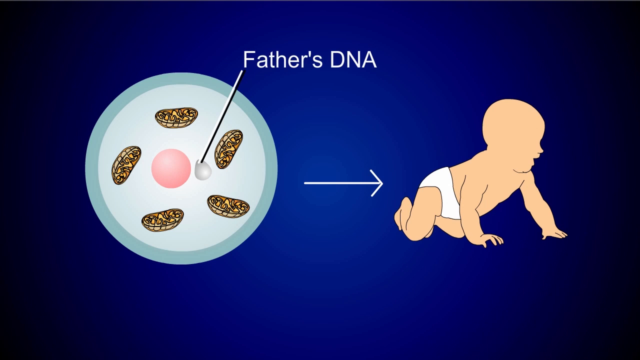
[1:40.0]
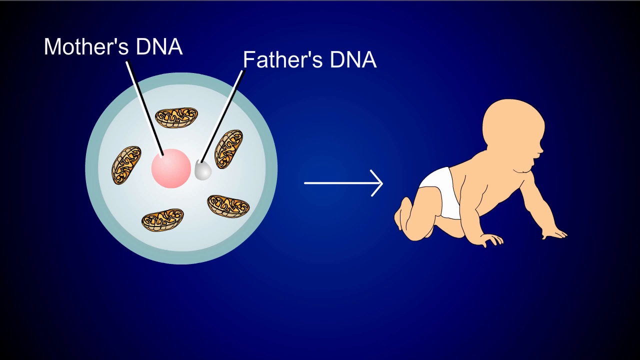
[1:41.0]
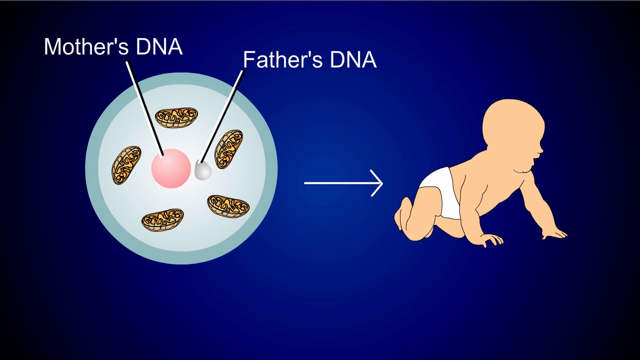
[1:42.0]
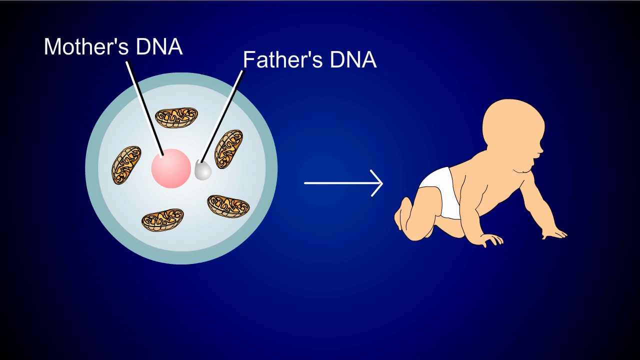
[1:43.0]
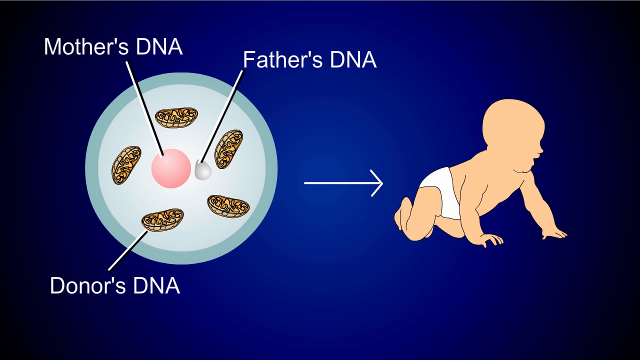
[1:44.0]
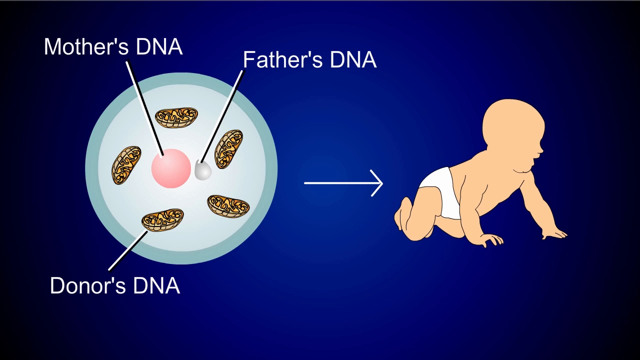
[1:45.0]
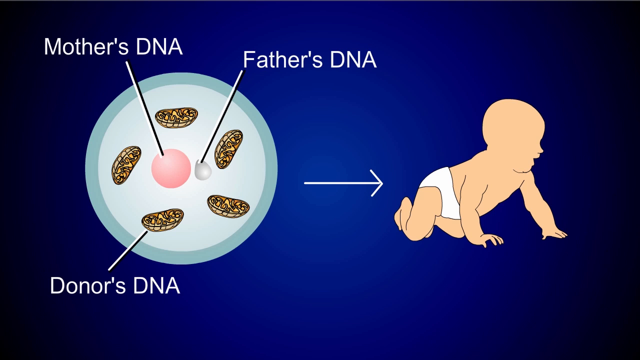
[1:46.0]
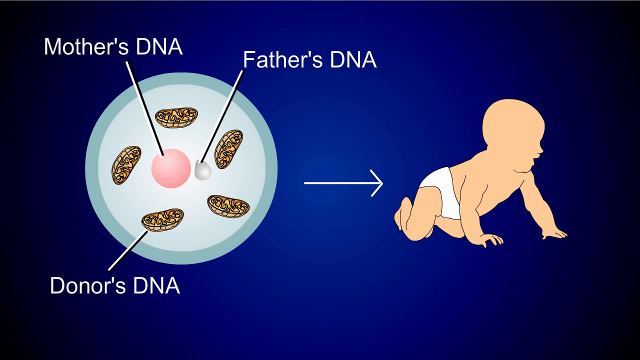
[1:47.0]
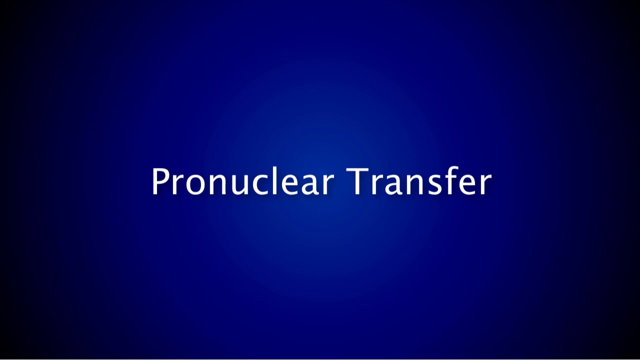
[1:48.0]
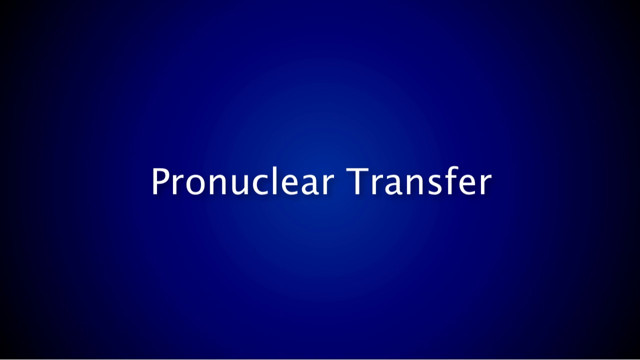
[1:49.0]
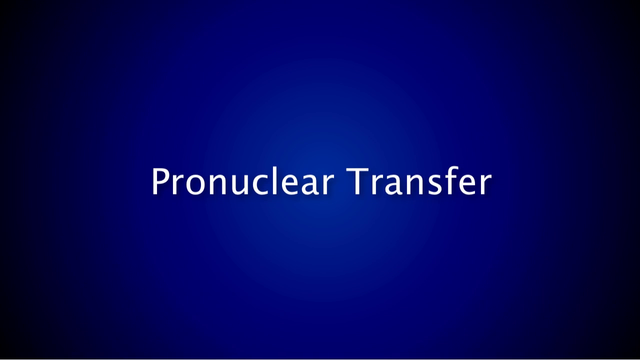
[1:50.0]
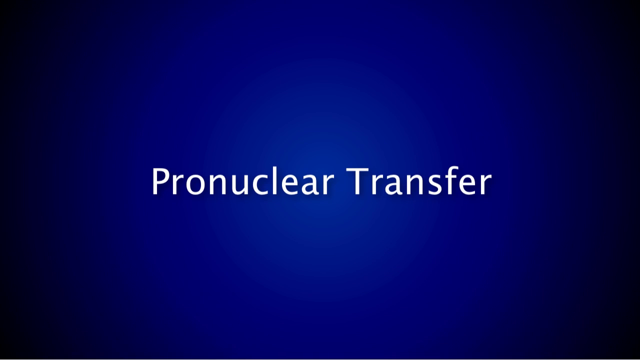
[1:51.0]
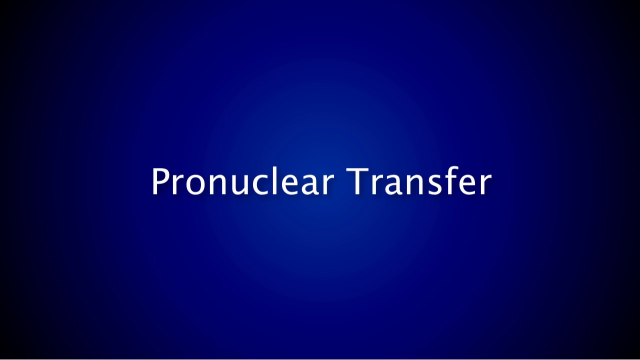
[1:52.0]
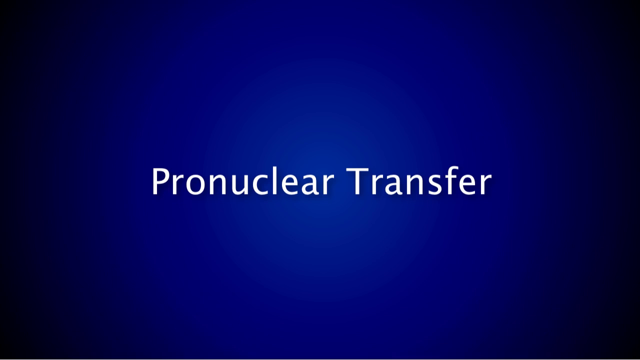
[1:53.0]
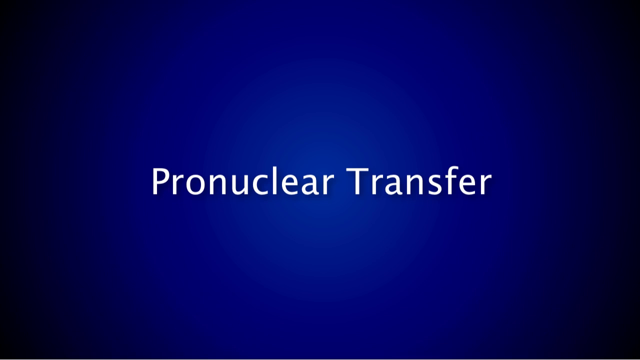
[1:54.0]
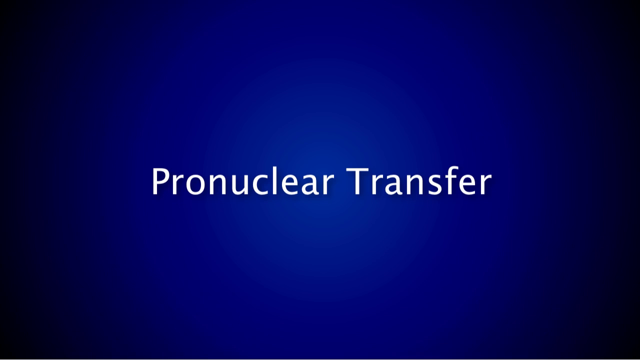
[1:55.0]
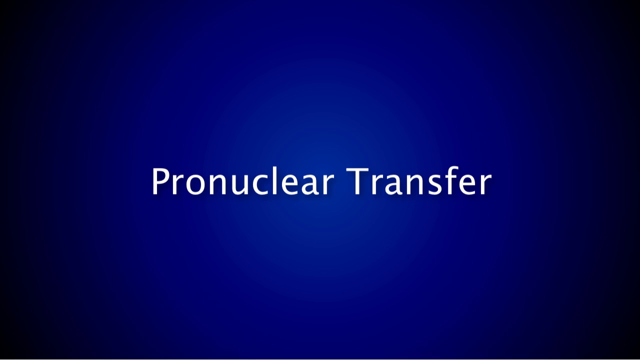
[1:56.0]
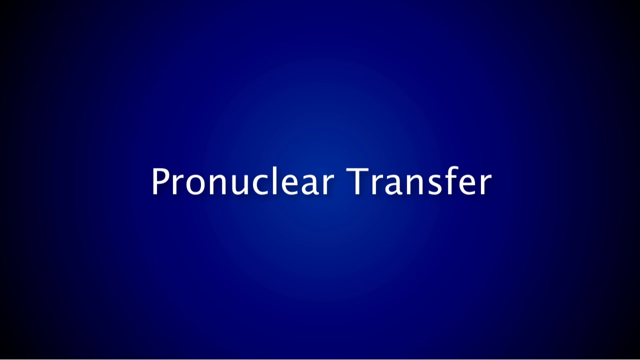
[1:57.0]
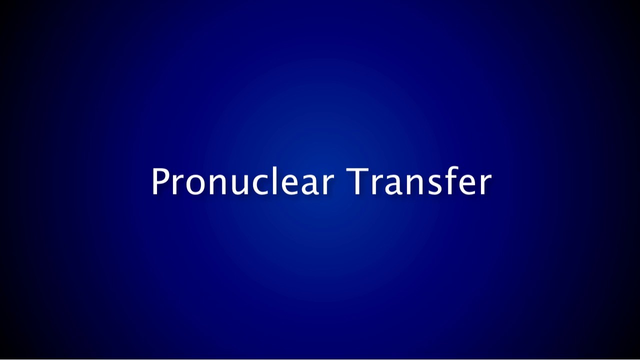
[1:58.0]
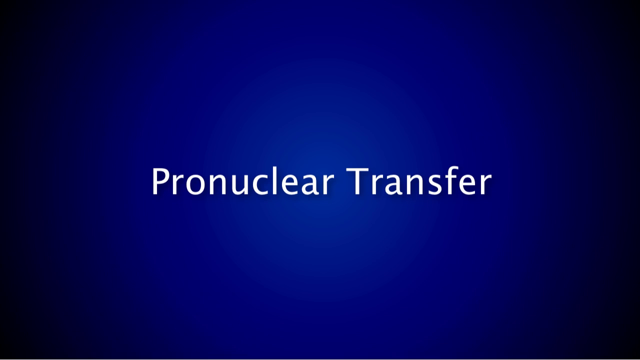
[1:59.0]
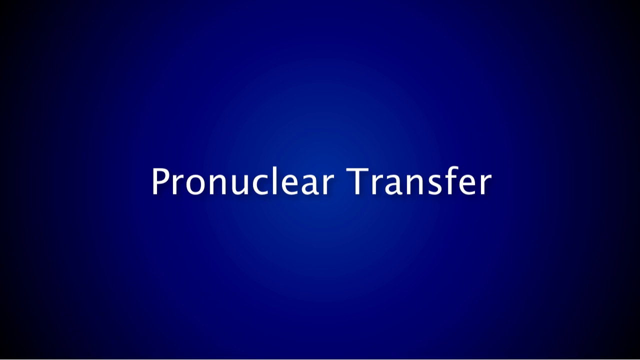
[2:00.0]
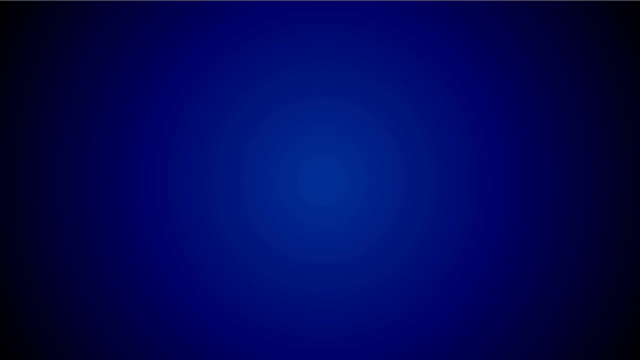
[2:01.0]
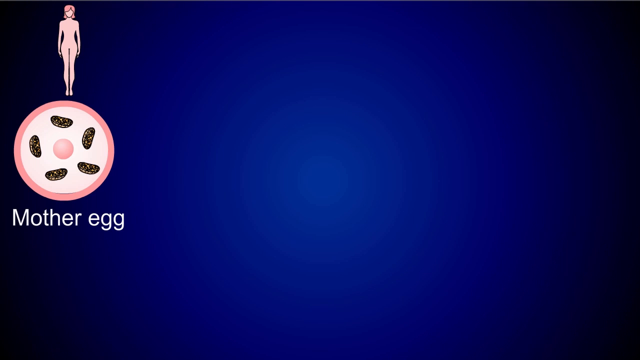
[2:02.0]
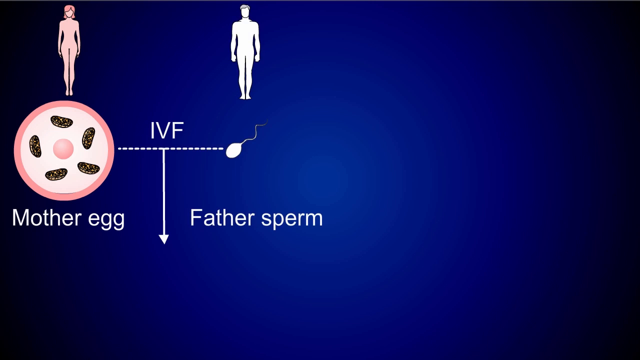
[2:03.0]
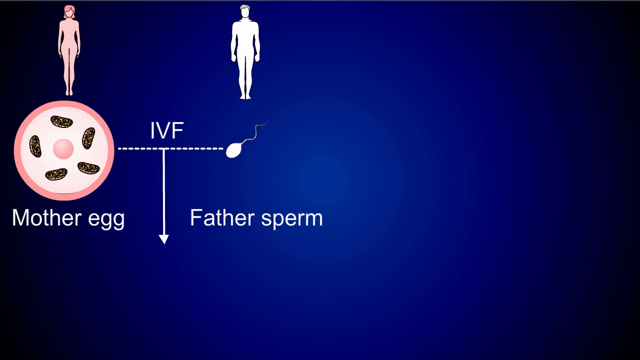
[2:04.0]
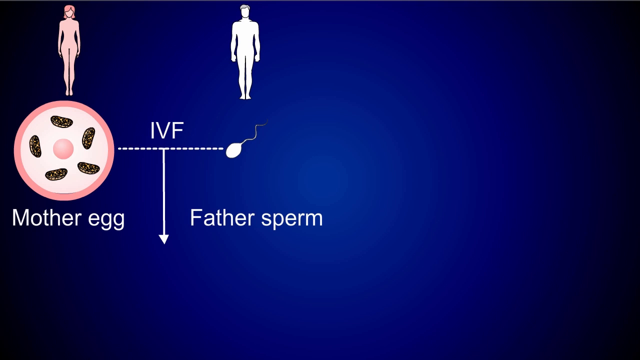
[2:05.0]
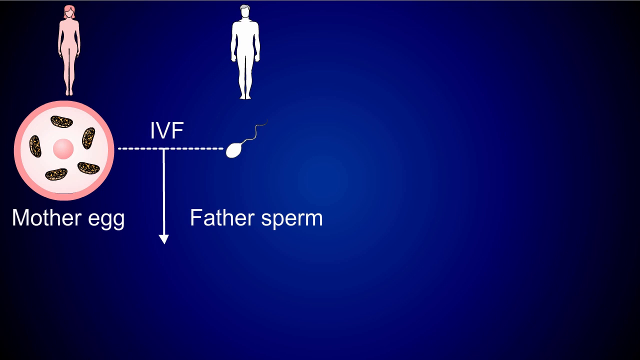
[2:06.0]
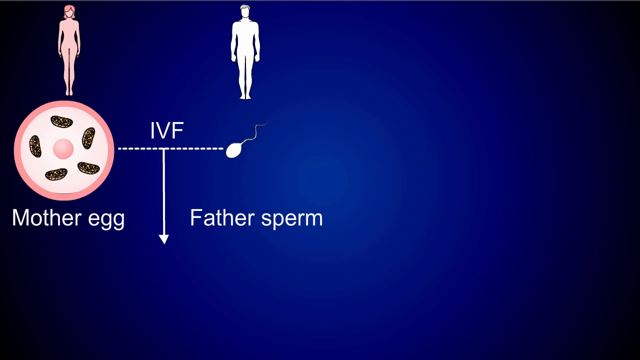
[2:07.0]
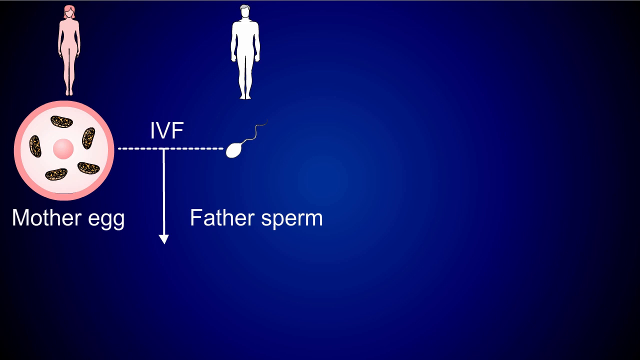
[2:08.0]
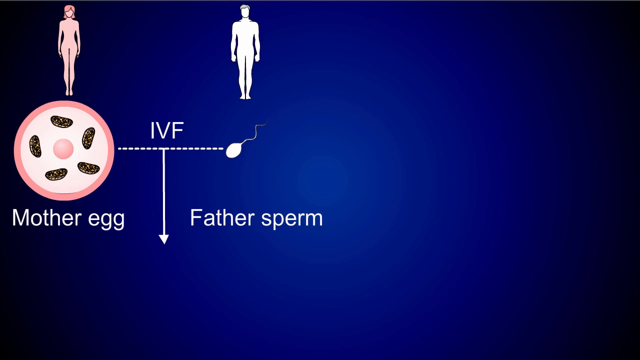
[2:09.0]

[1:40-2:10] The father's DNA is shown inside a donor egg as a little ball, maybe white, sitting right next to the egg, which is pink. An arrow points over to a tan silhouette of a baby wearing a white diaper. The mother's DNA inside the pink is pointed out, and the donor's DNA is shown as the mitochondria. Then "pronuclear transfer" appears in white words on a blue background. Next the mother egg plus the father sperm are shown coming together in IVF, in vitro fertilization, producing the final egg at the bottom of the screen, also on a navy background.